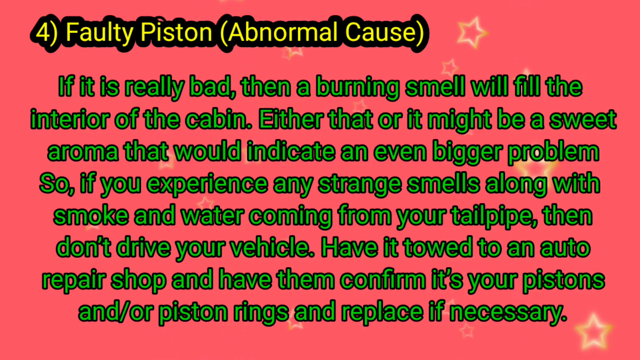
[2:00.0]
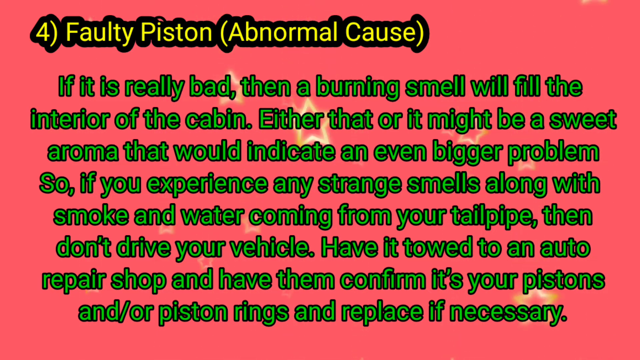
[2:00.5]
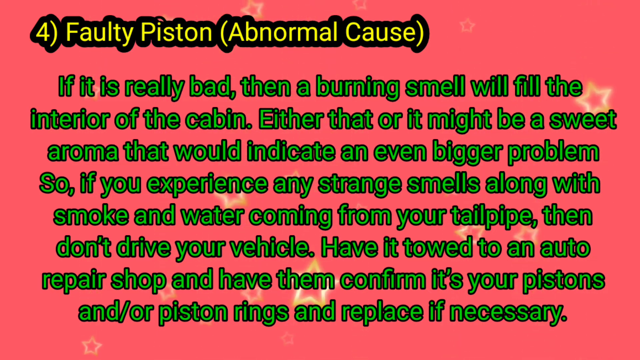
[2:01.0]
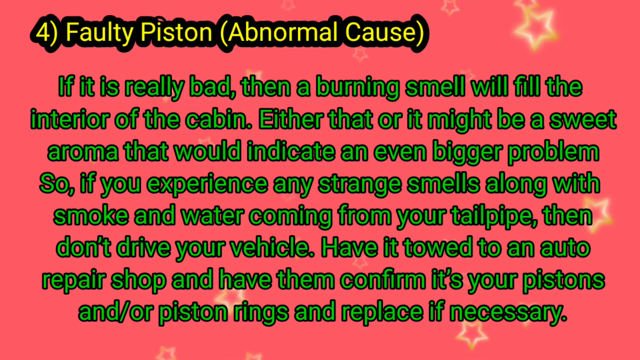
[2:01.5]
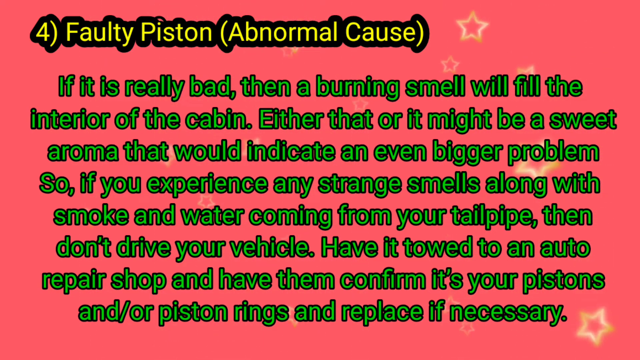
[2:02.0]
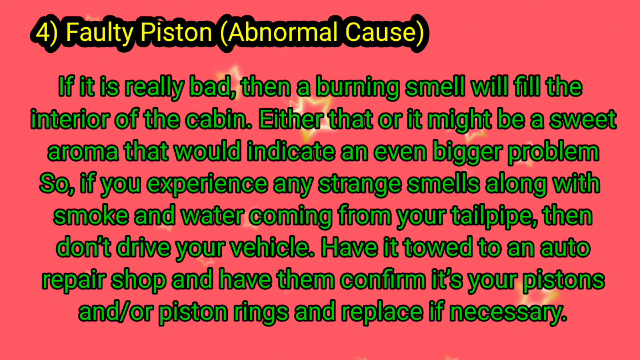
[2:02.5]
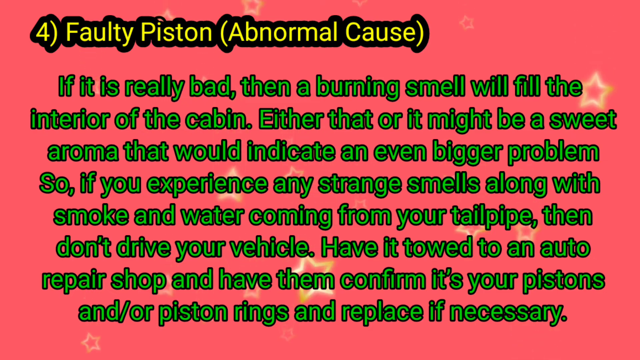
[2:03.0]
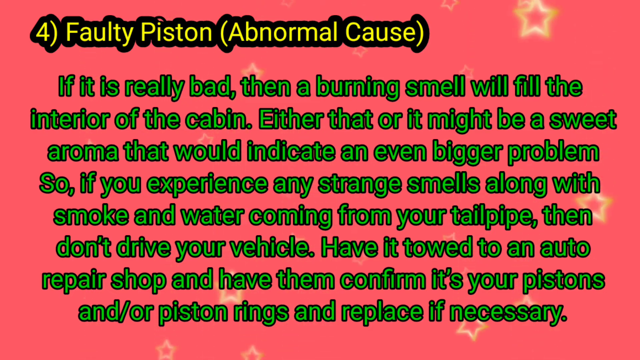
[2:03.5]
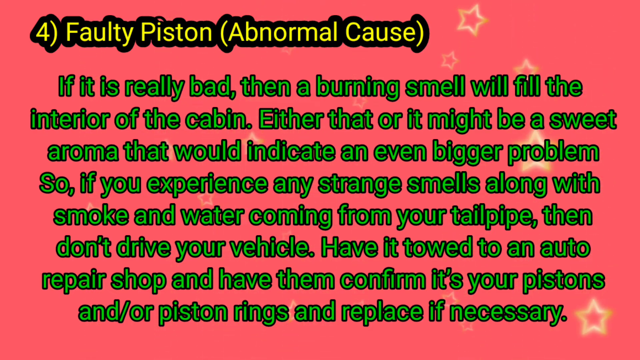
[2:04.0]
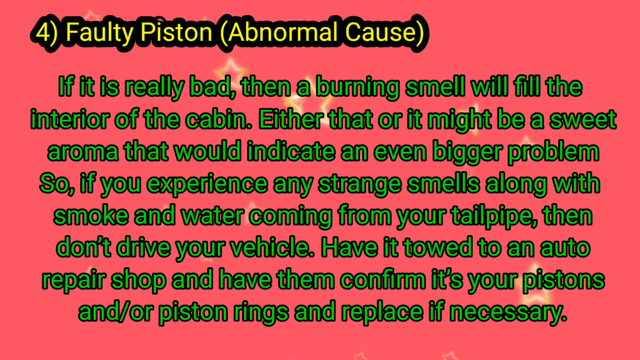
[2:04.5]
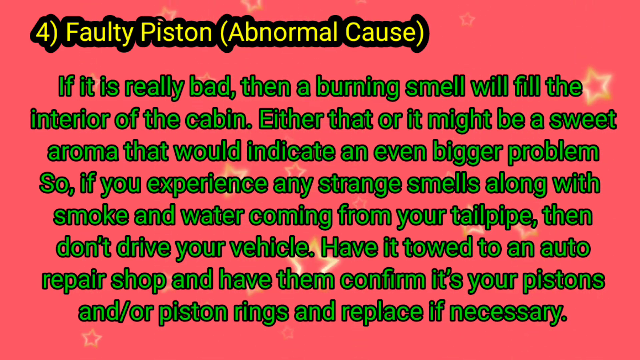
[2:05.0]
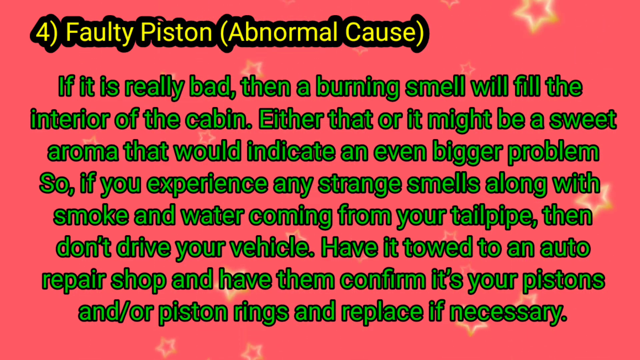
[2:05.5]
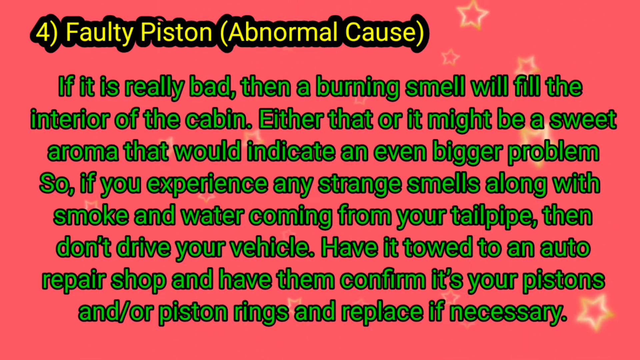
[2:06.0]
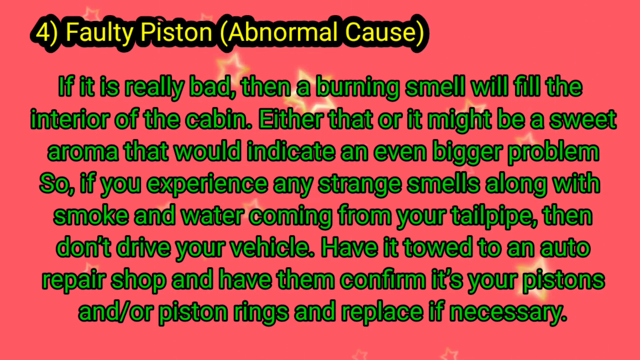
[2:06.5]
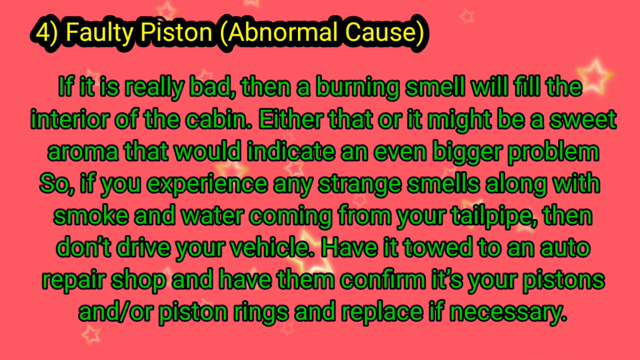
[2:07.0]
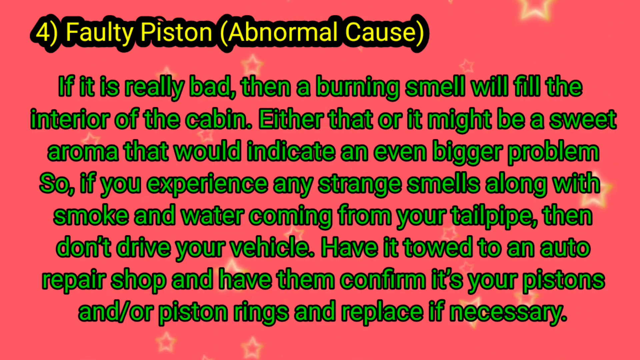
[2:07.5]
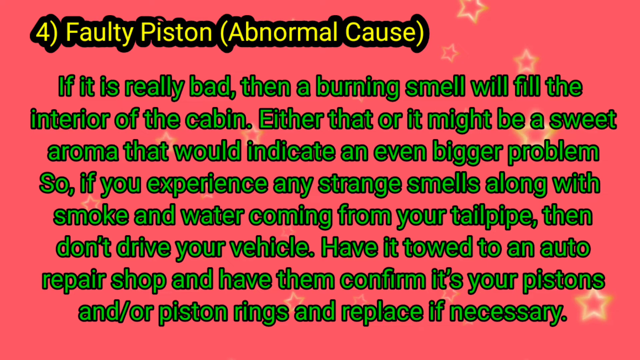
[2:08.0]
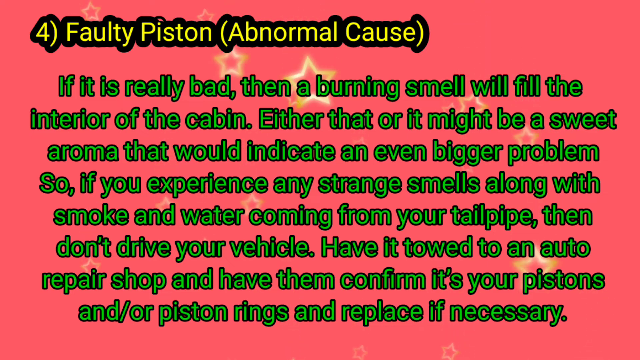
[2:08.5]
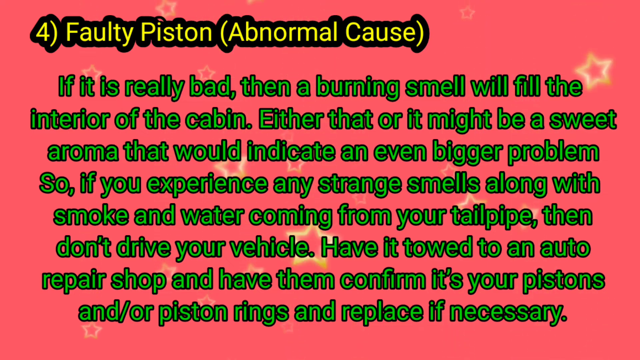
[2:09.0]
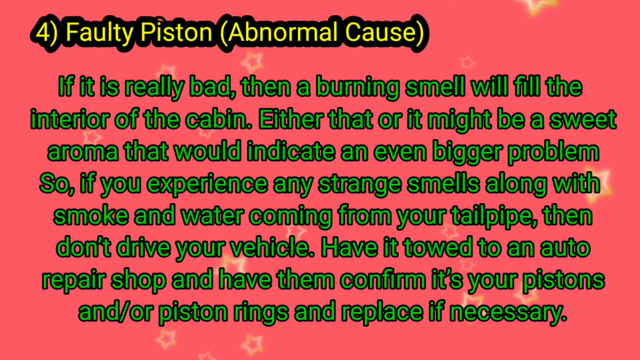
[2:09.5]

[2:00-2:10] Hollow yellow stars fall from the top, spread throughout a pinkish background. Yellow lettering at the top left reads "four faulty piston abnormal cause", and green lettering below reads "if it is really bad, then a burning smell will fill the interior of the cabin. Either that, or it might be a sweet aroma that would indicate an even bigger problem. So if you experience any strange smells along with smoke and water coming from your tailpipe, then don't drive your vehicle. Have it towed to an auto repair shop and have them confirm it's your pistons and or piston rings".